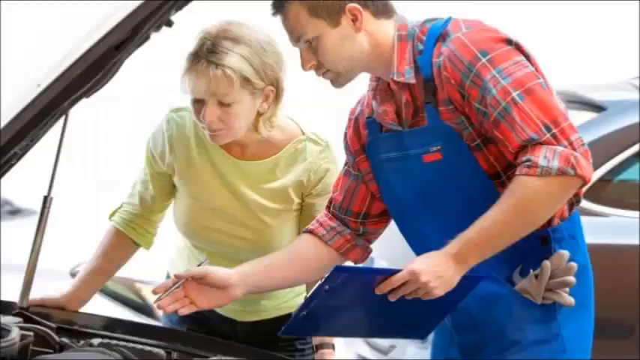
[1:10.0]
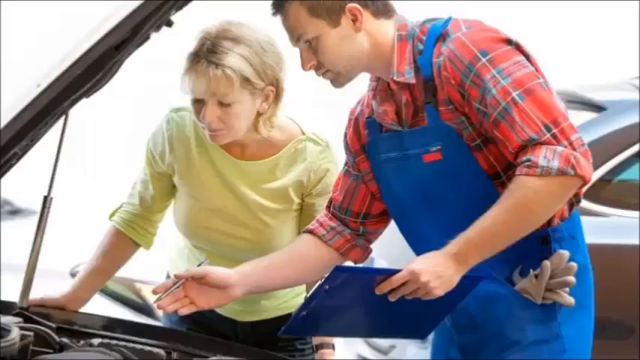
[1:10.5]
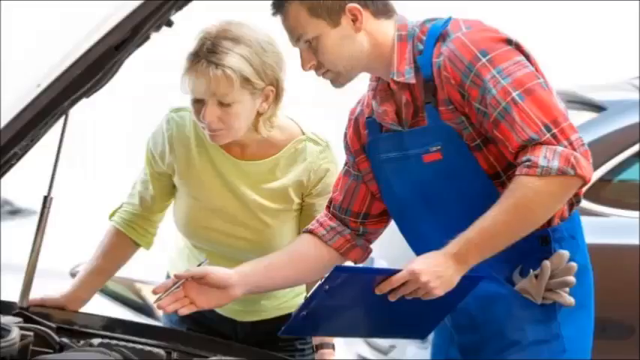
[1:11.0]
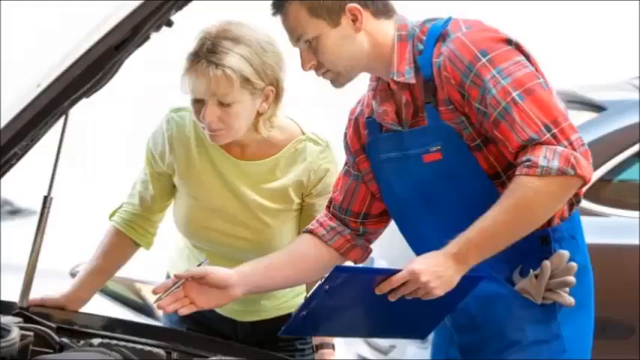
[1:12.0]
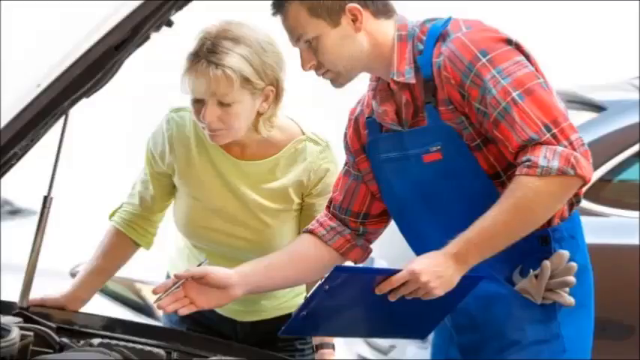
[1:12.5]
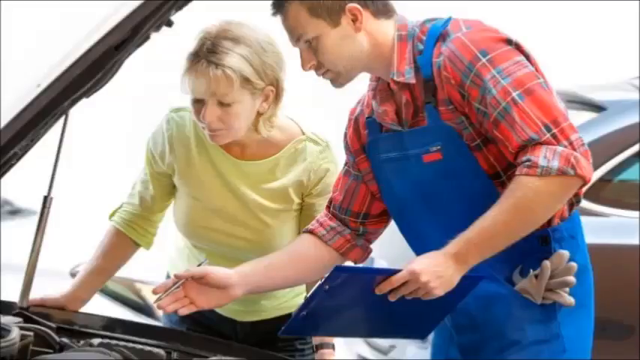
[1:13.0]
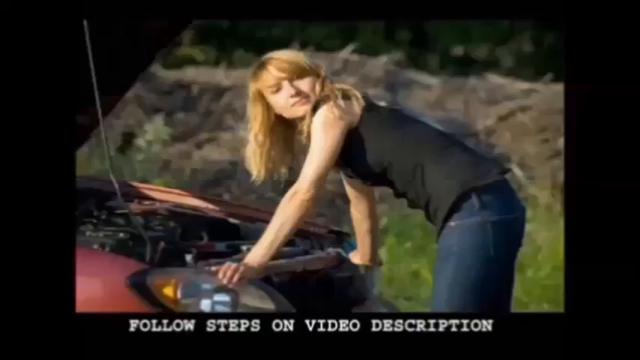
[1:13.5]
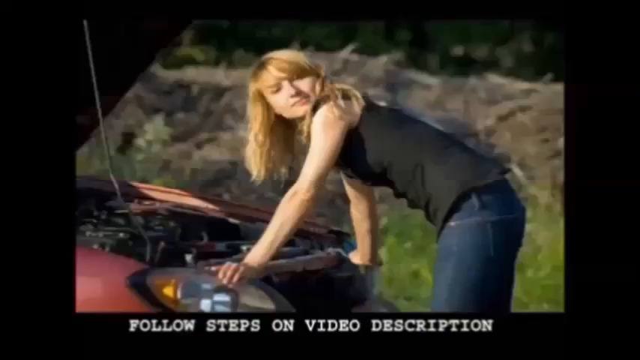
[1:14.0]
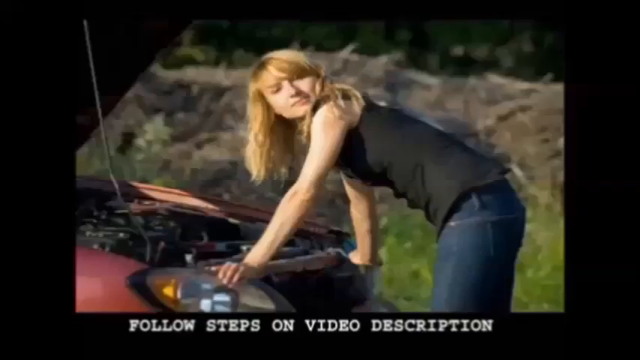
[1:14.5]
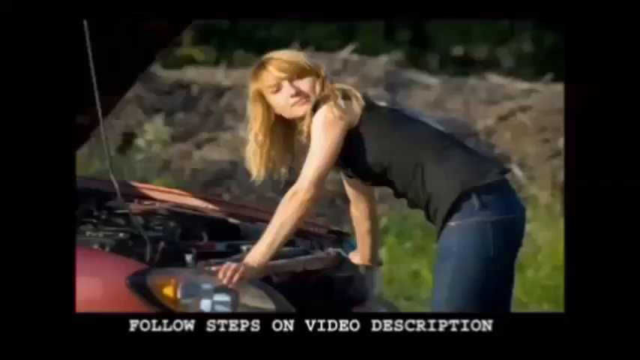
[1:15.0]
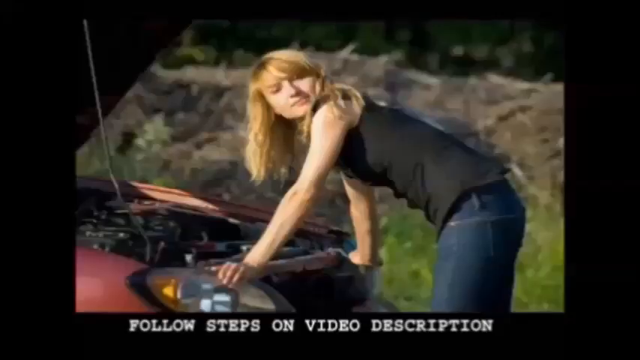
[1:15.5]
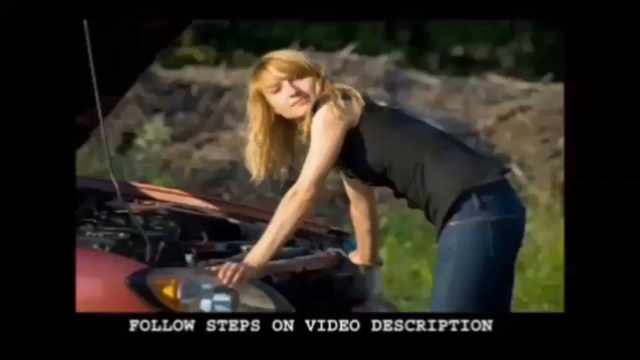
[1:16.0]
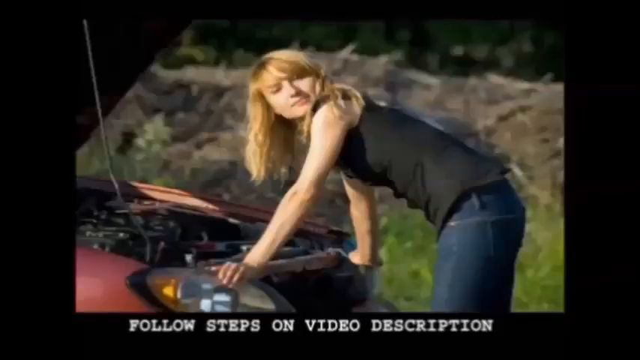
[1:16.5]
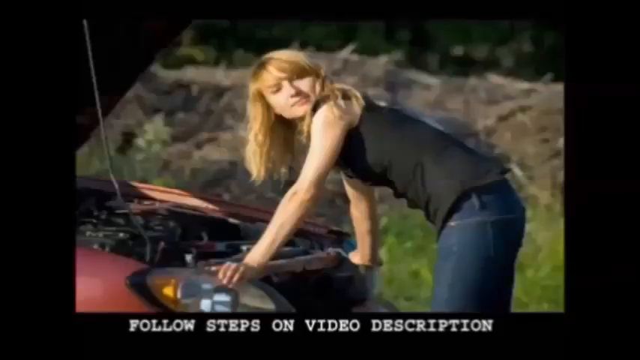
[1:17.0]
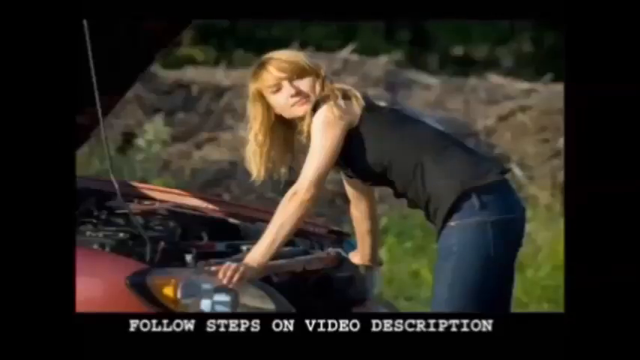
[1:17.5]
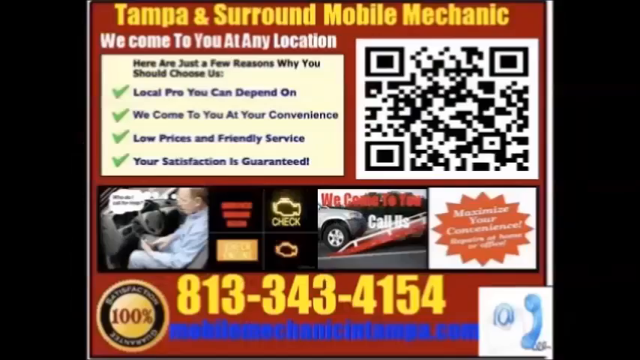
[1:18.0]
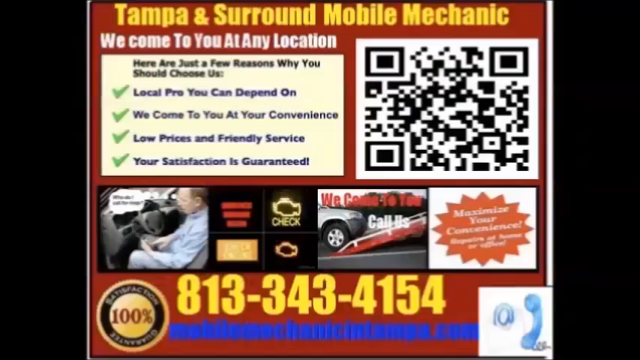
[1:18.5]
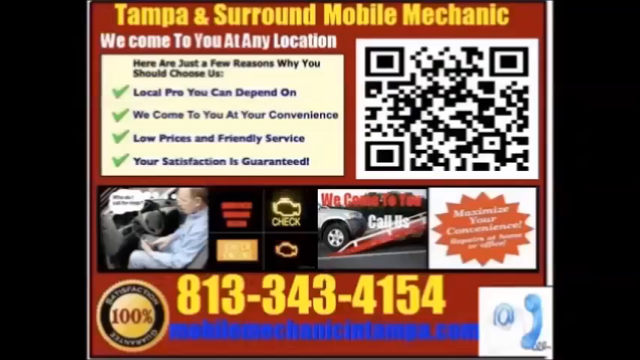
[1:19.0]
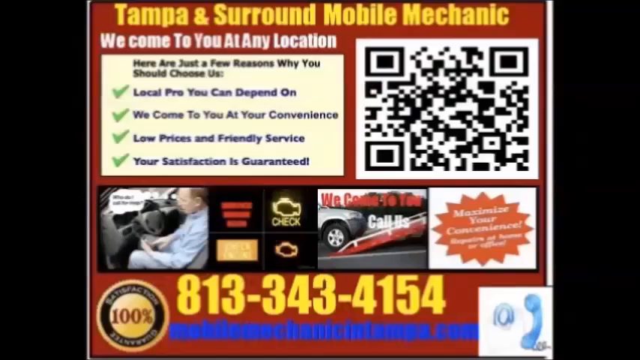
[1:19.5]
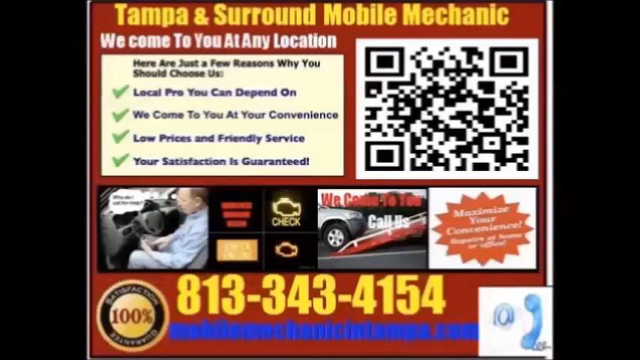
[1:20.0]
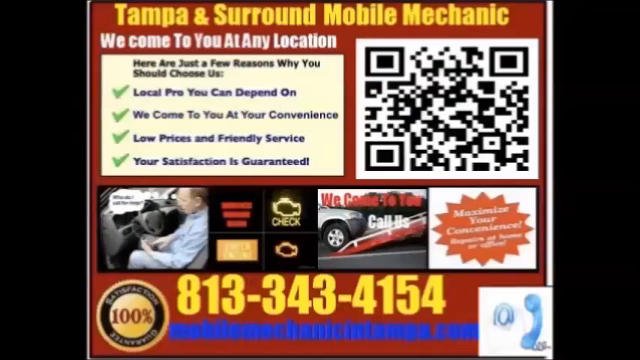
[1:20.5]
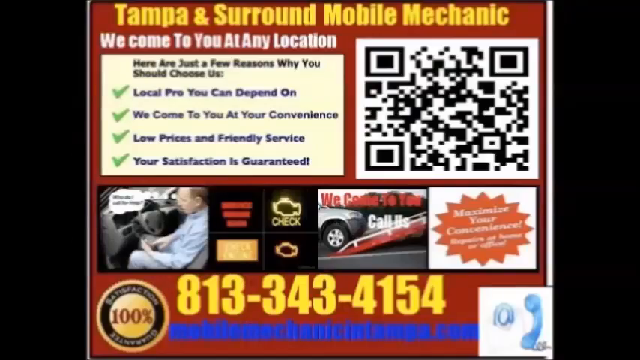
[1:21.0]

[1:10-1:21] A woman in a yellow shirt looks under the hood of her car. Beside her is a man in blue overalls over a red, blue and white plaid shirt, with work gloves in his pocket; he looks into her vehicle, apparently to help with her engine. Another woman with long blonde hair, wearing a black sleeveless shirt and blue jeans, is bent over her engine and looks back over her shoulder, seemingly for help. Then the text reads "Tampa and Surround Mobile Mechanic, we come to you at any location."